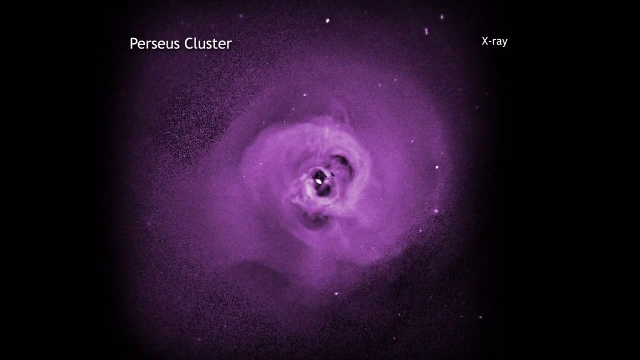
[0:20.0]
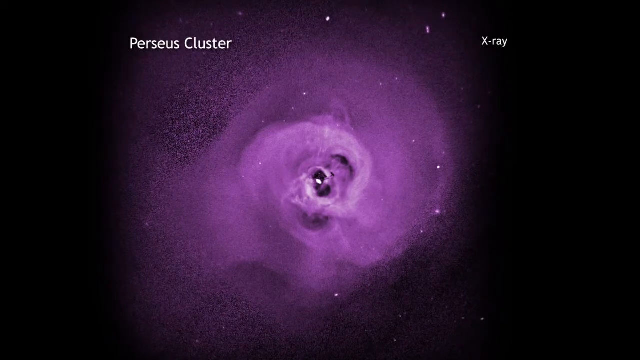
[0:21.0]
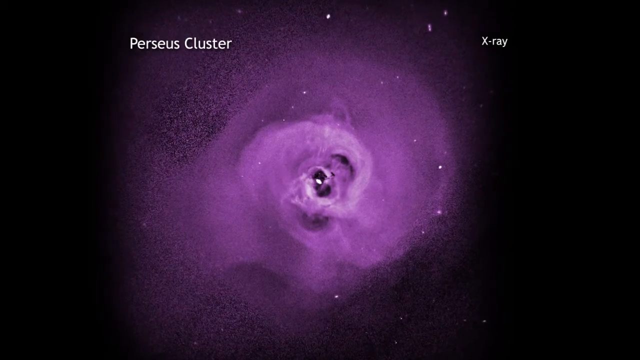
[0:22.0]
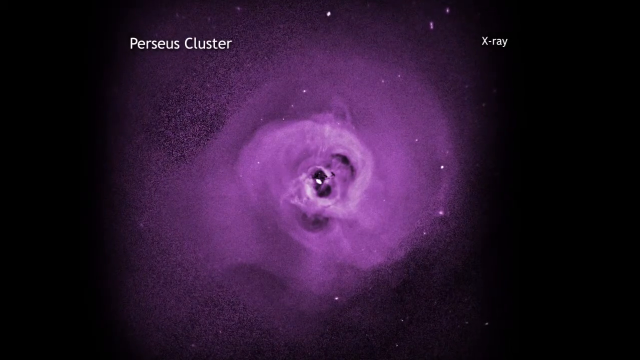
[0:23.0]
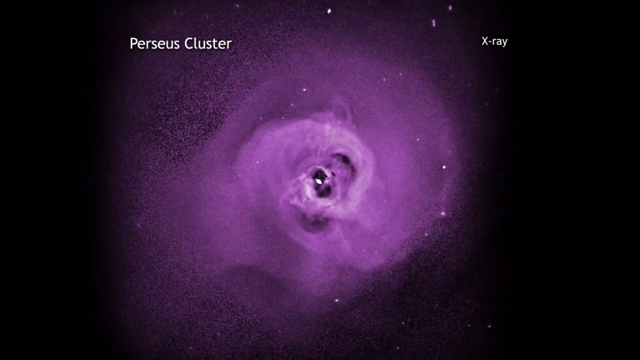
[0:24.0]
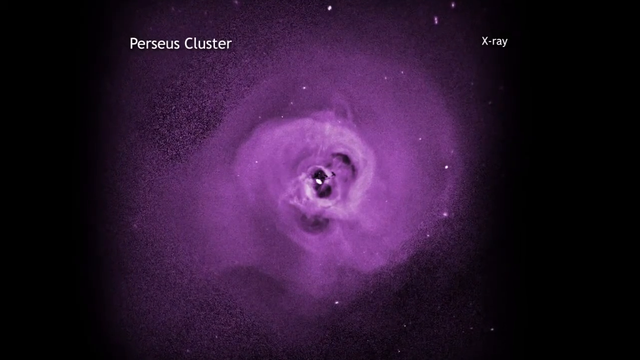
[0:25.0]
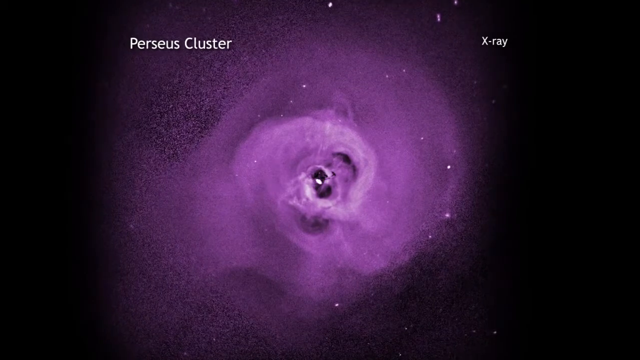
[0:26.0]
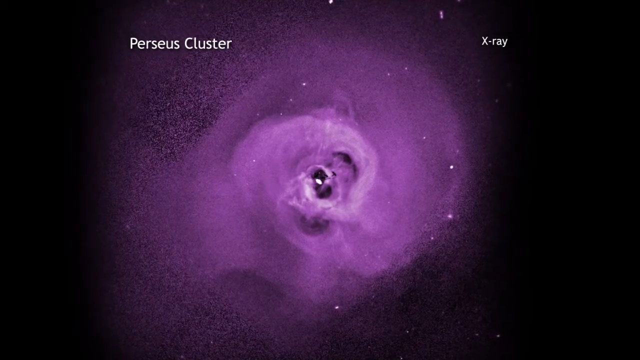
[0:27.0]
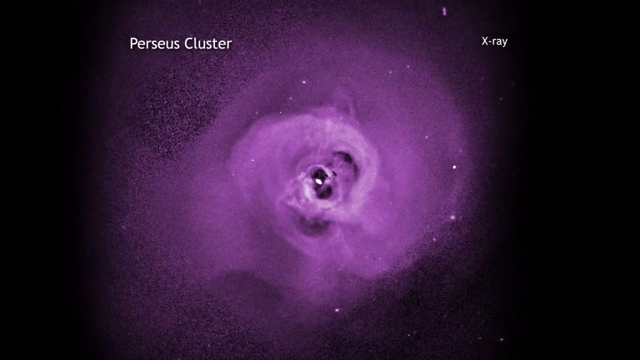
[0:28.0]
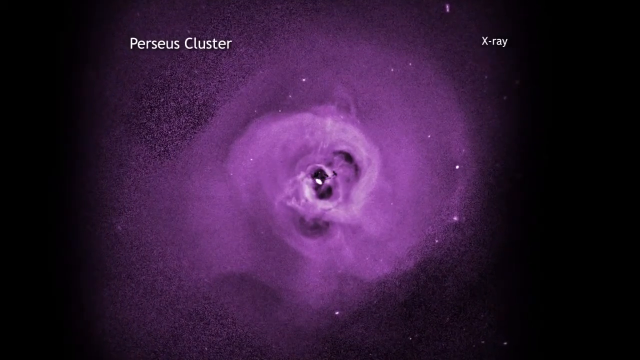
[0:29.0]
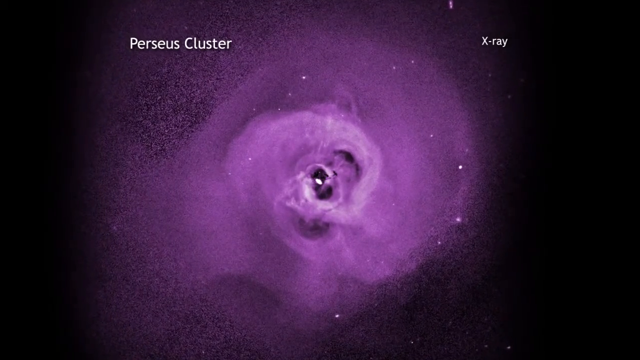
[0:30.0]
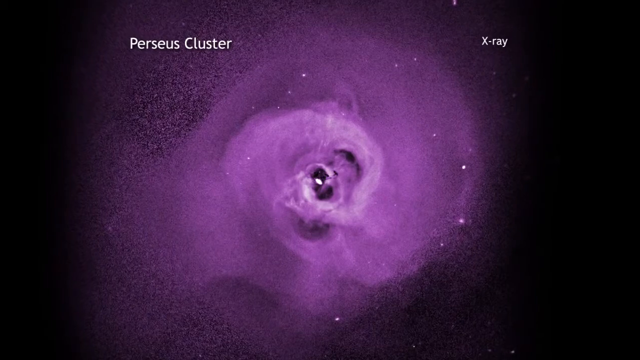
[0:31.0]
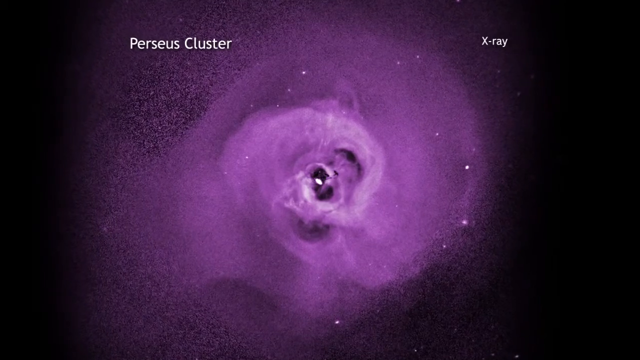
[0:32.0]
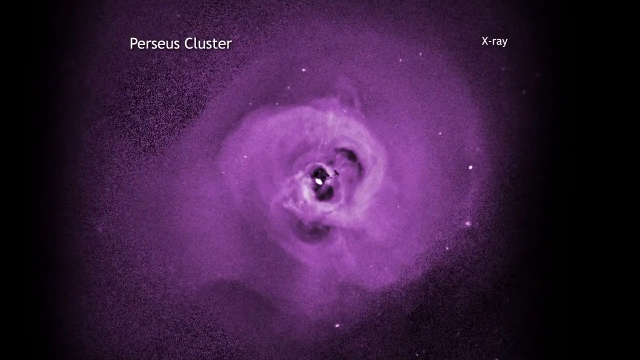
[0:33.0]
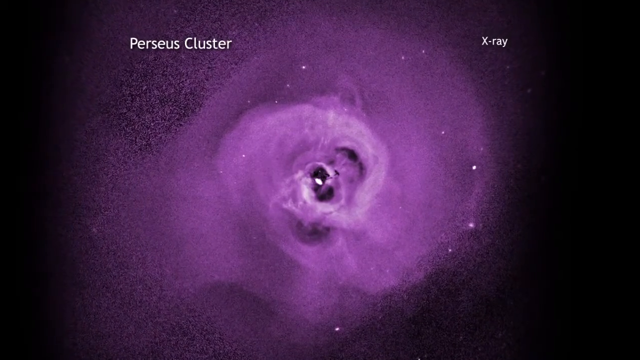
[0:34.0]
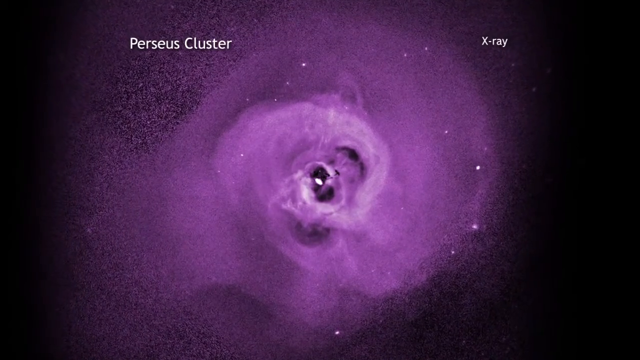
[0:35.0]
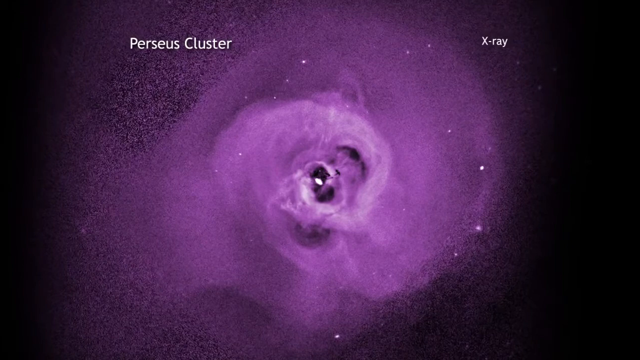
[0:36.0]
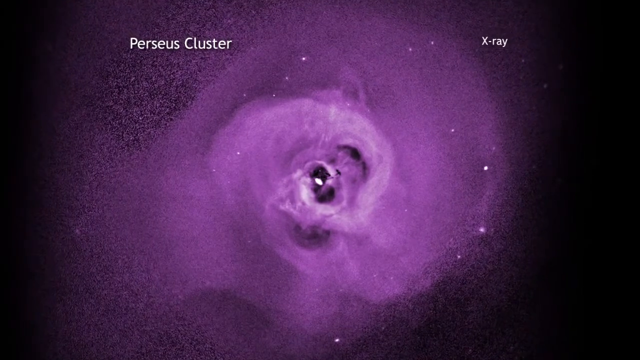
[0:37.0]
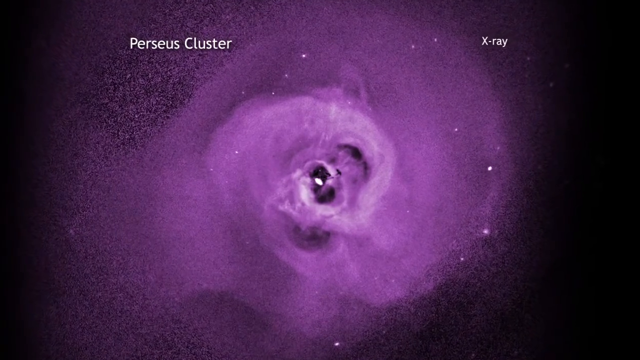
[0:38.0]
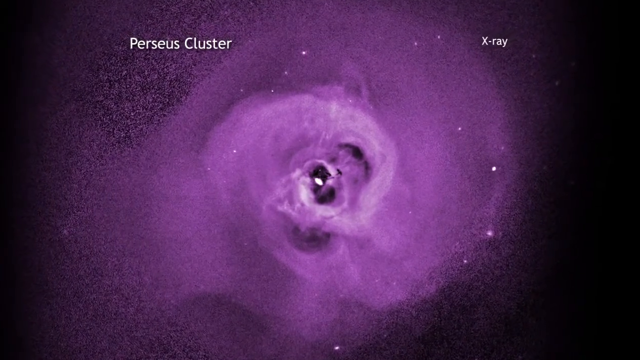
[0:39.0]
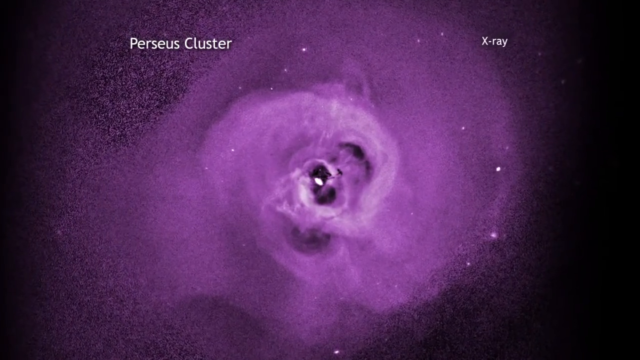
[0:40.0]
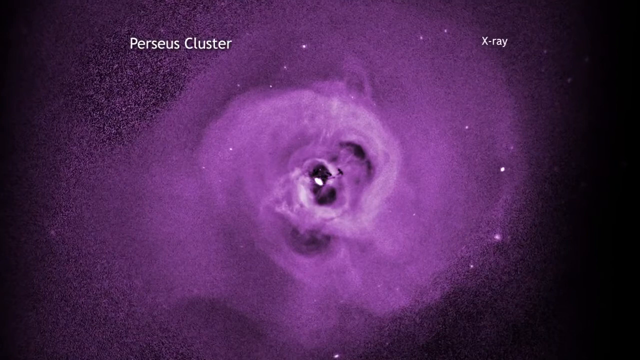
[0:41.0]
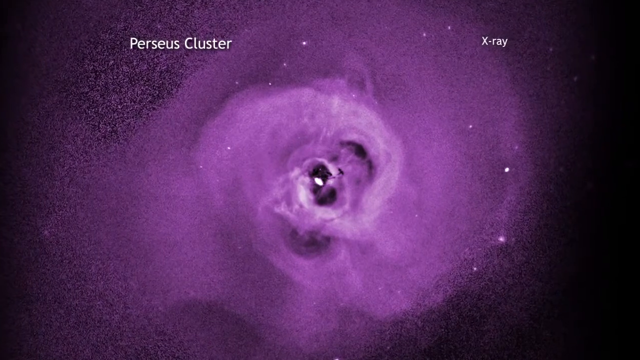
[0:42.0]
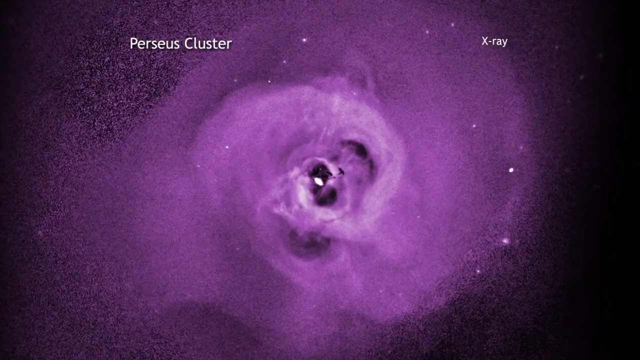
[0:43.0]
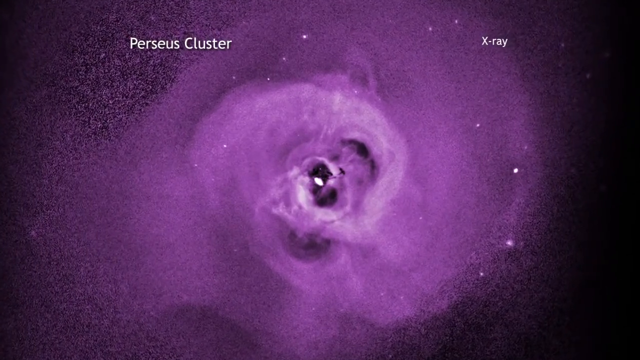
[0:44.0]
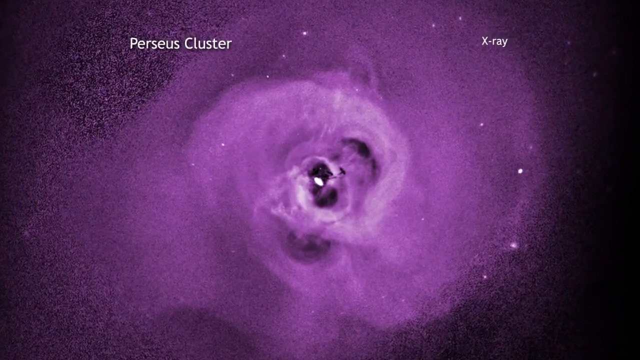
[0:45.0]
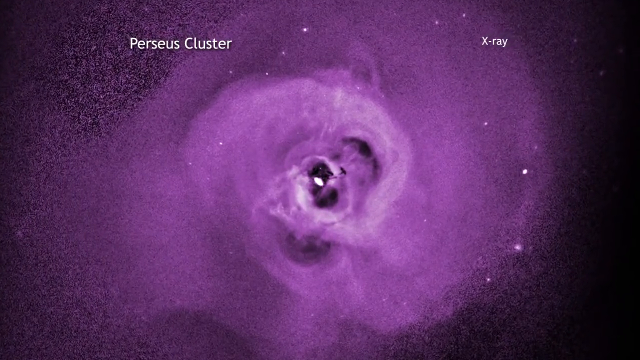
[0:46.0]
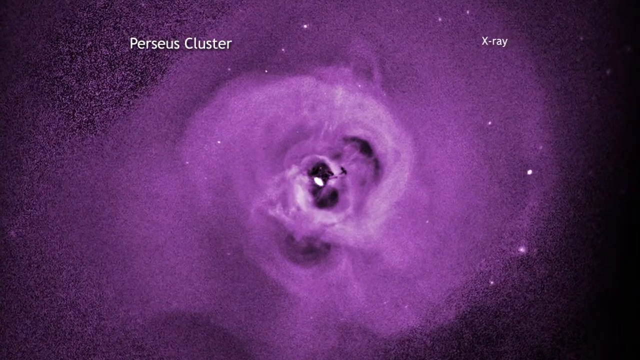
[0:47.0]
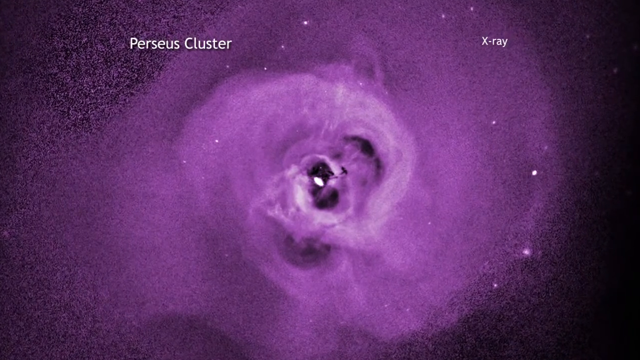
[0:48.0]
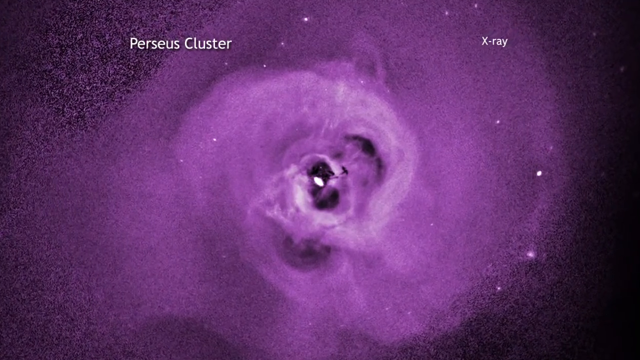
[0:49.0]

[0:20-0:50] The purple photo is shown again: a large cluster of purple dots with an overlapping center, forming a star structure. White text now appears on top of it, reading "Perseus Cluster" in the top left of the screen and "X-ray" on the right. The image is again zoomed into very slowly. It starts with the Perseus cluster in the center of a black screen, where it seems to be cut off drastically, as if pasted onto the black background. As the view gets closer, the cluster engulfs the black space and is shown in its entirety. It is the same cluster shown at the beginning, its center swirled with white and purple lines and white stars on top.